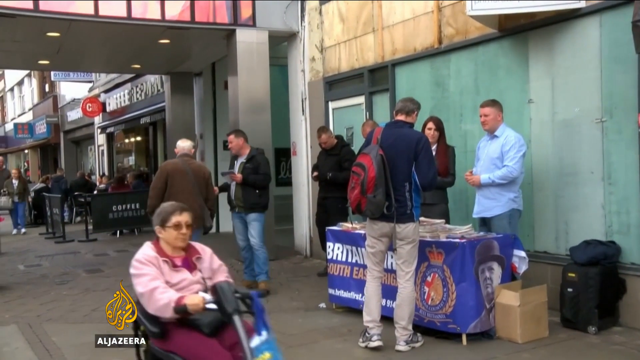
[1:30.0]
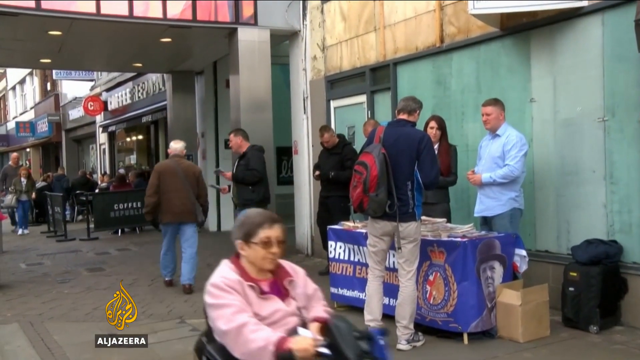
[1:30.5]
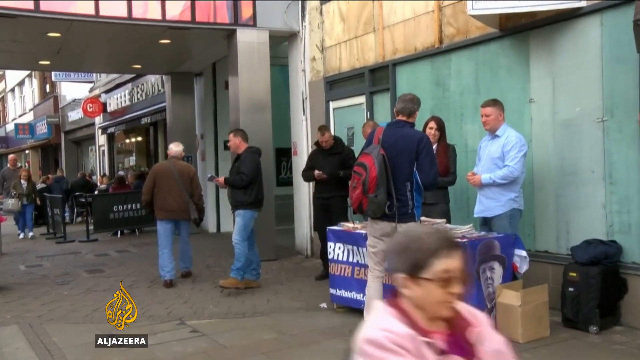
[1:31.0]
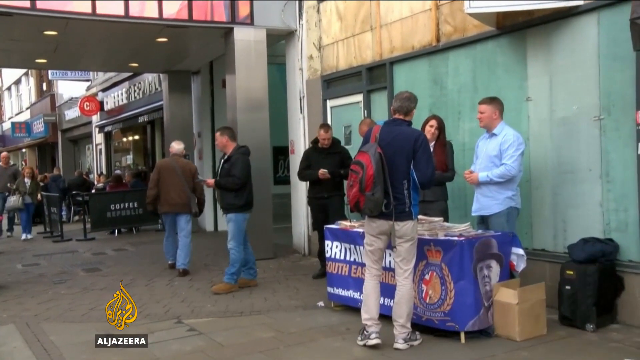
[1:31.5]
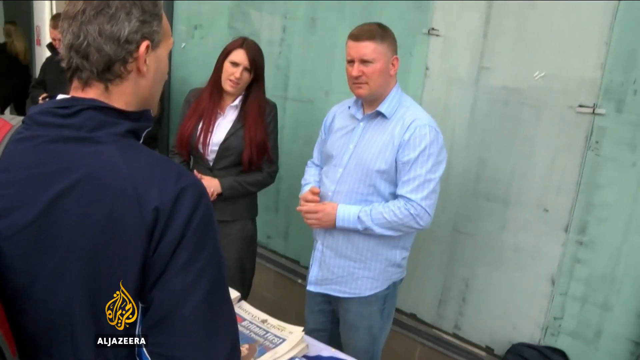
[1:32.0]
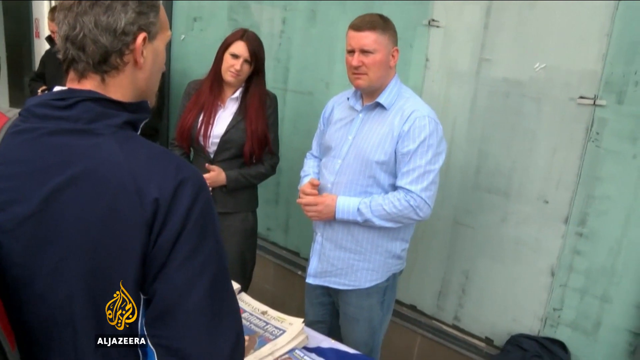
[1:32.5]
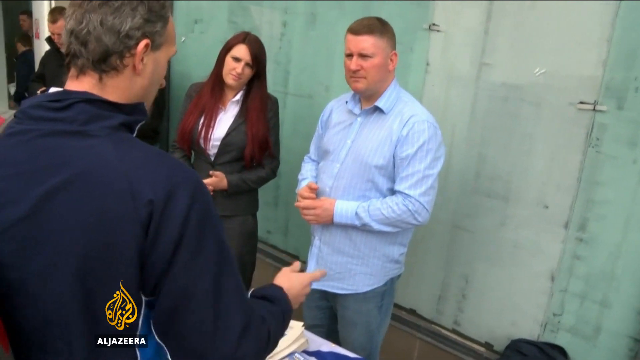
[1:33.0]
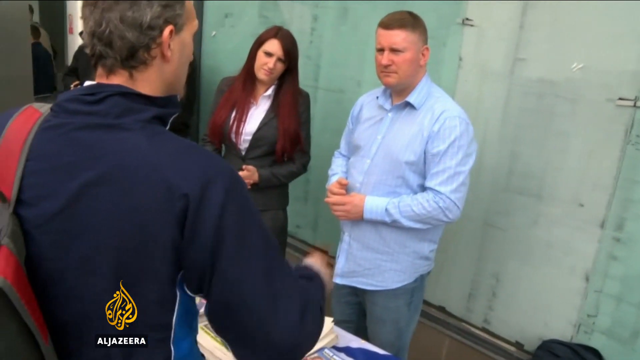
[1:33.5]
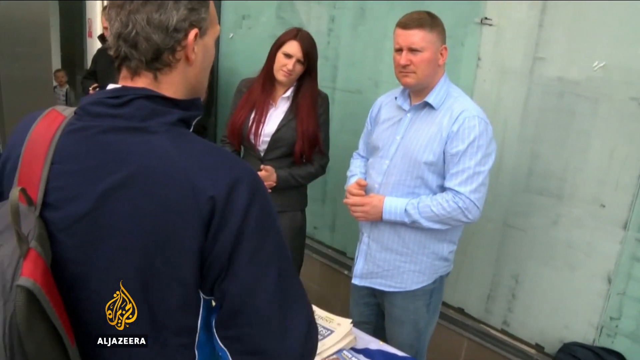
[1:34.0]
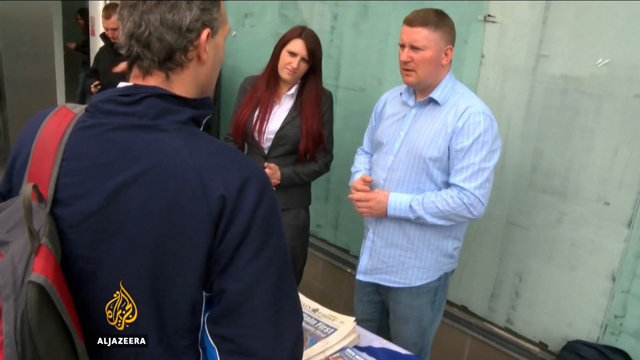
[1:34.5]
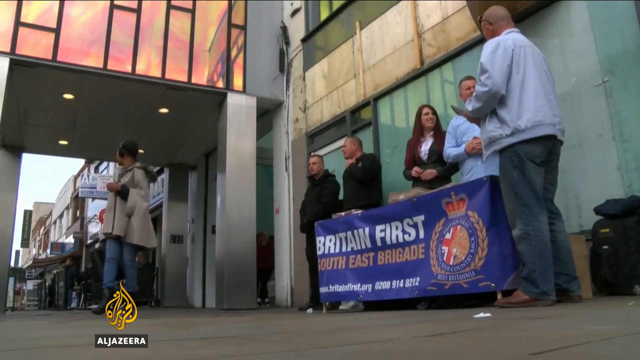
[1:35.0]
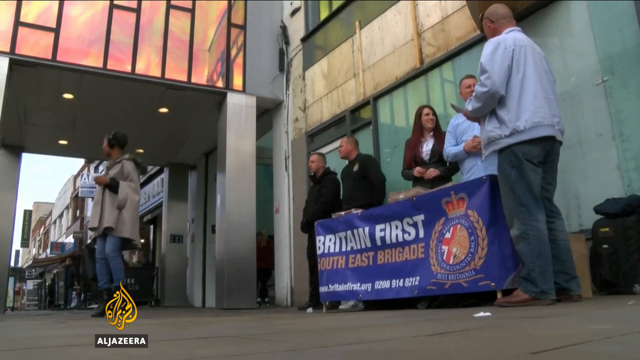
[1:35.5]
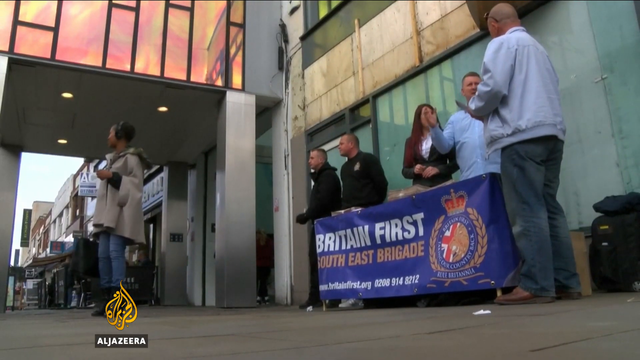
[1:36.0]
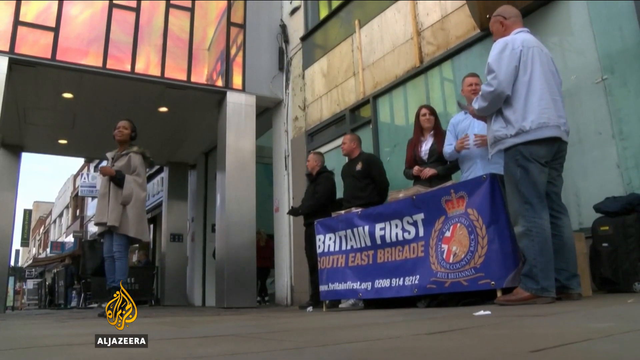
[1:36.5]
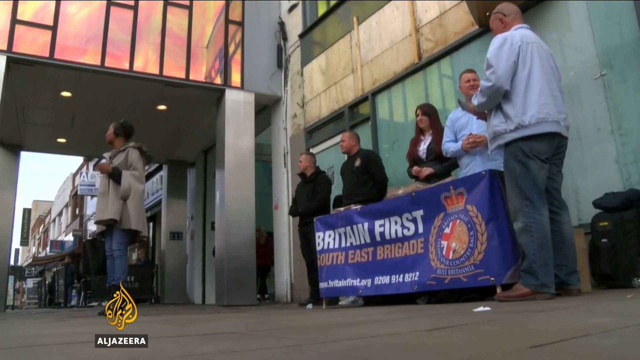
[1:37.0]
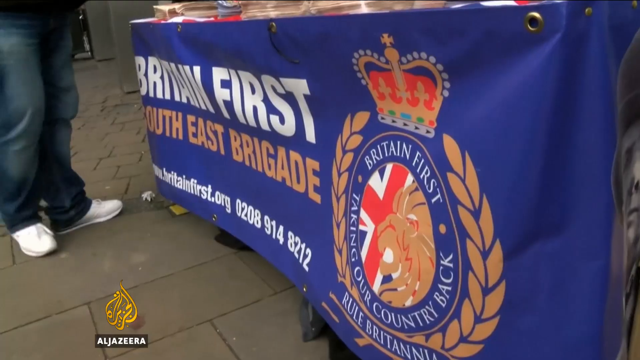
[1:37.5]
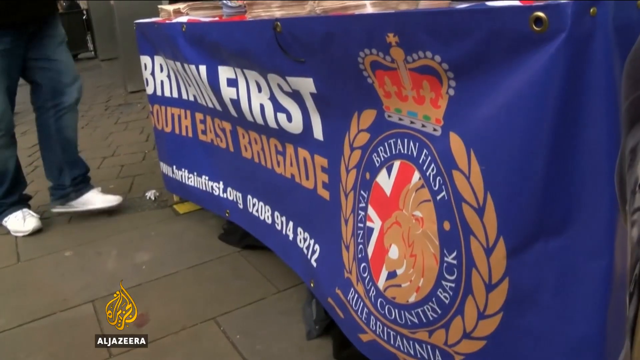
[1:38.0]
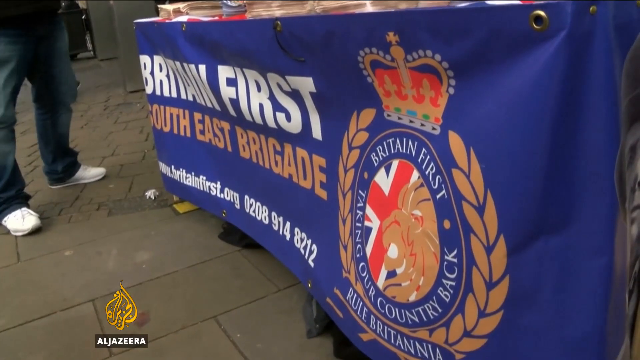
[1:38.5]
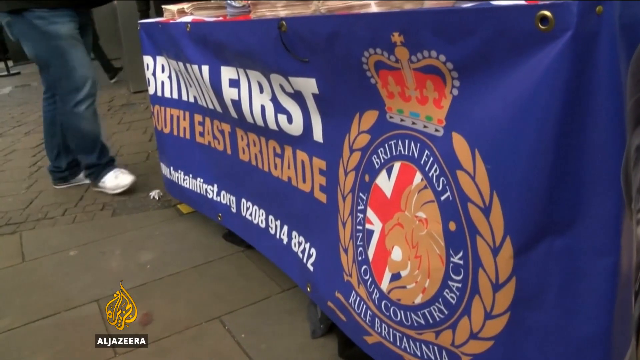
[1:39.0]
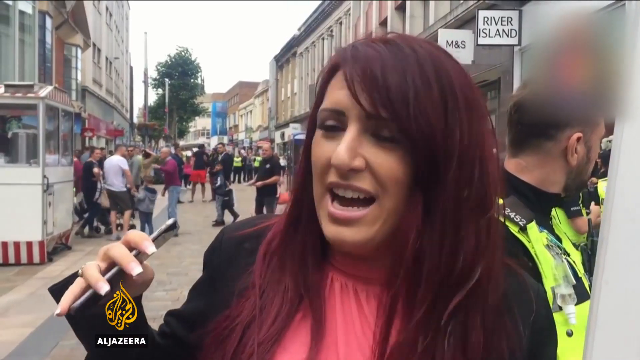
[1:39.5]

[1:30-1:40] The outdoor sidewalk scene is in an inner city, with shops lining the sidewalk. A small table is set up with a purple banner around it. A man in a long-sleeved blue button-up shirt and blue jeans stands on the right side of the table, and a woman in a red coat is on the left side. A man on the front side of the table, wearing a black coat, tan pants, and a red backpack, has stopped to talk to them. A woman in a pink jacket rides by on a scooter in the foreground. The camera changes to a low view and focuses on the banner hanging off the front of the table, which reads "Britain First" in large white letters with "South East Brigade" below it in gold letters. On the right side of the banner is a coat of arms with a crown at the top, surrounded by gold laurels.